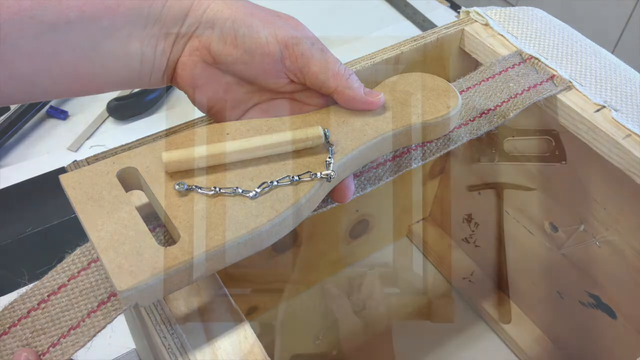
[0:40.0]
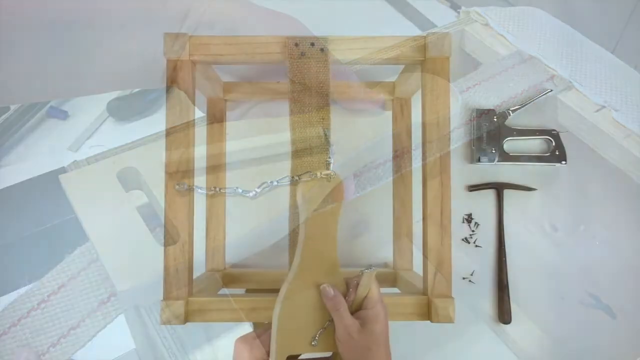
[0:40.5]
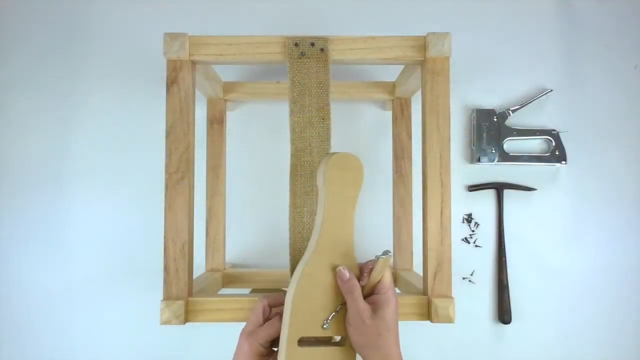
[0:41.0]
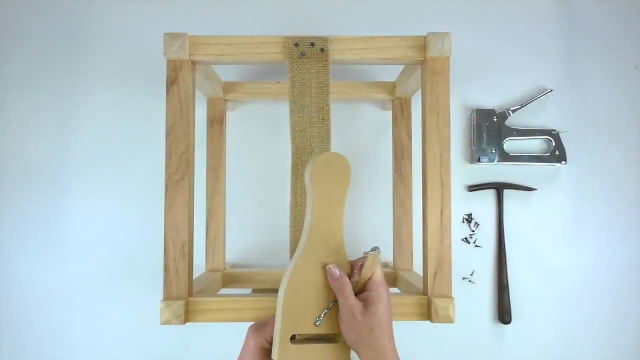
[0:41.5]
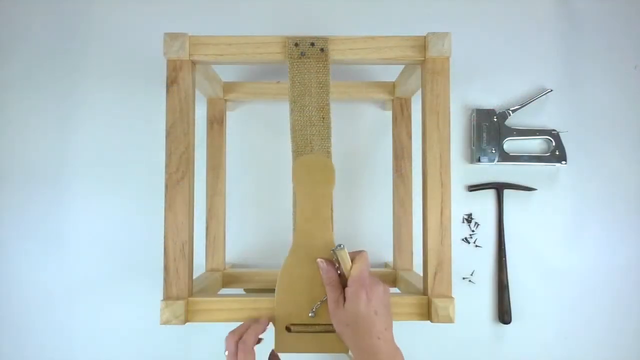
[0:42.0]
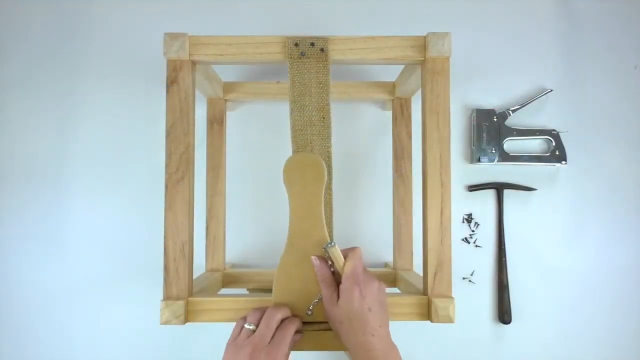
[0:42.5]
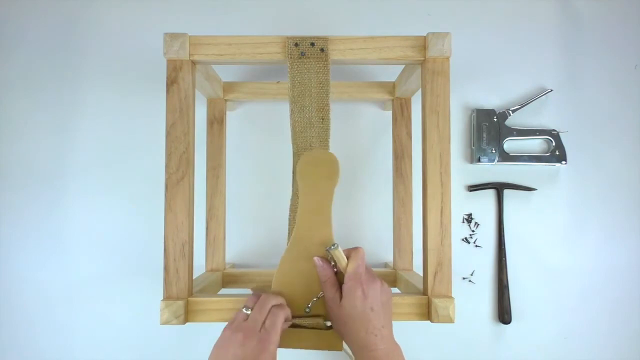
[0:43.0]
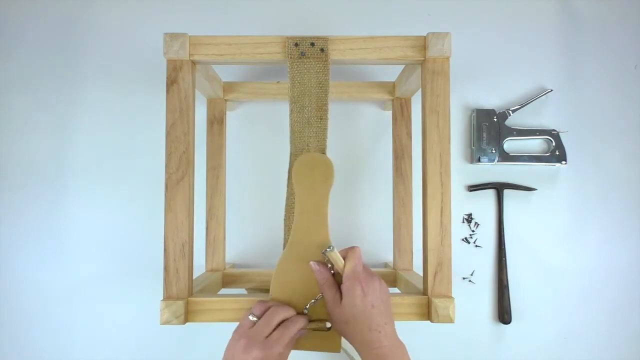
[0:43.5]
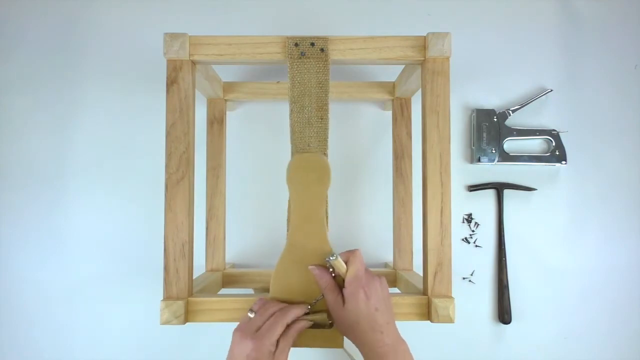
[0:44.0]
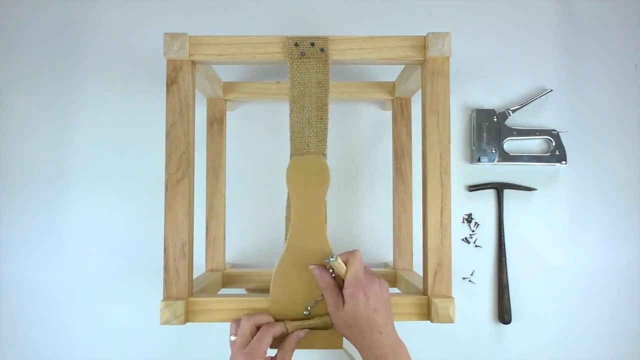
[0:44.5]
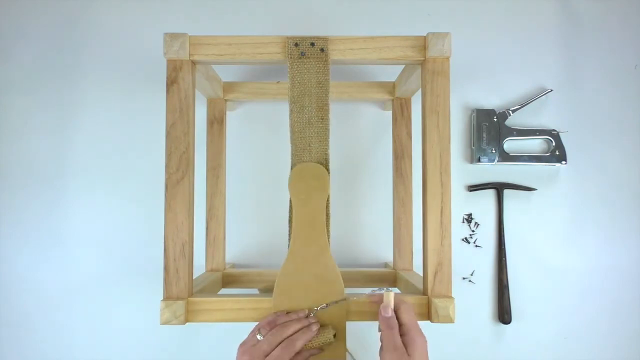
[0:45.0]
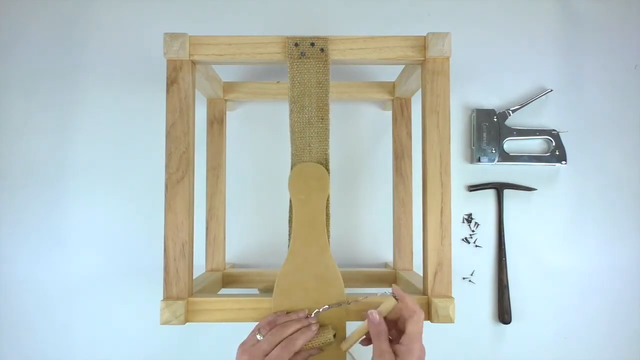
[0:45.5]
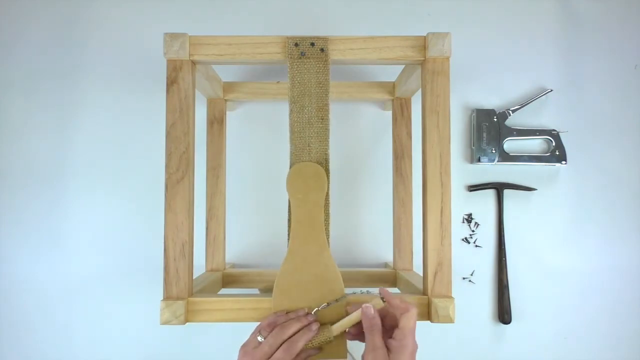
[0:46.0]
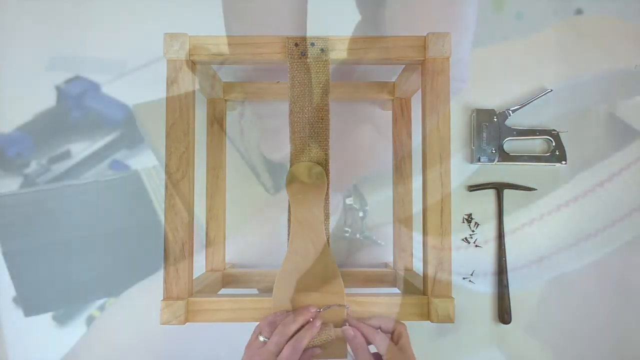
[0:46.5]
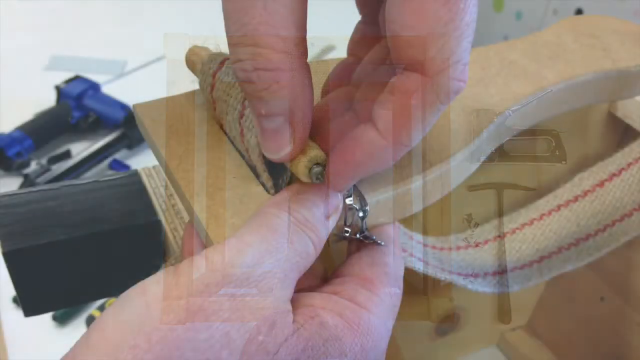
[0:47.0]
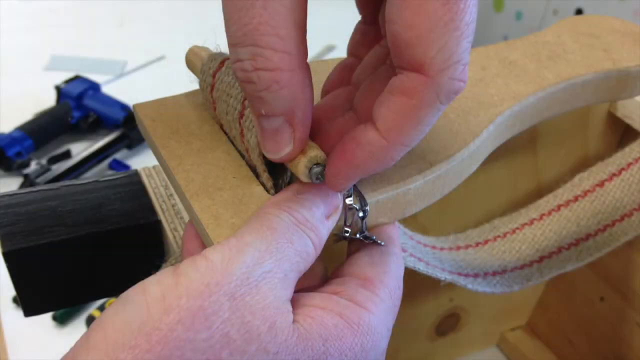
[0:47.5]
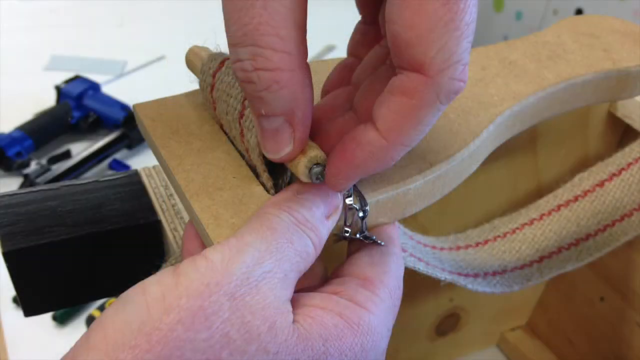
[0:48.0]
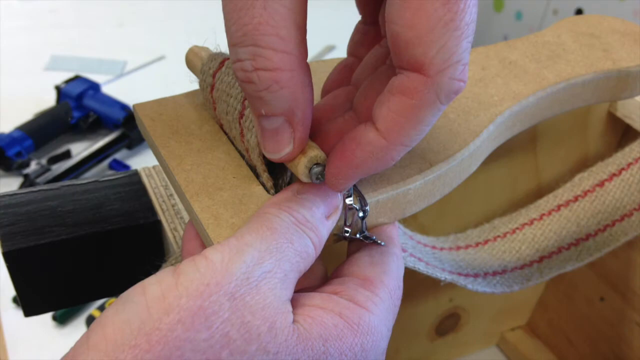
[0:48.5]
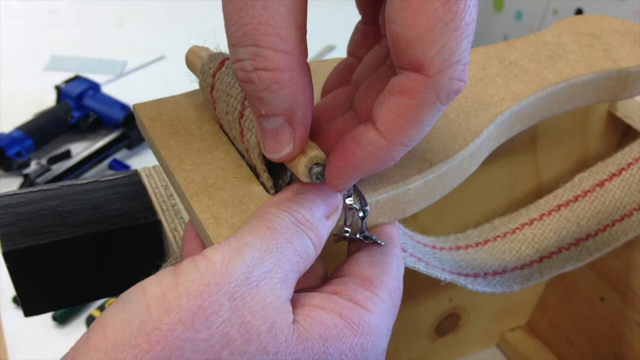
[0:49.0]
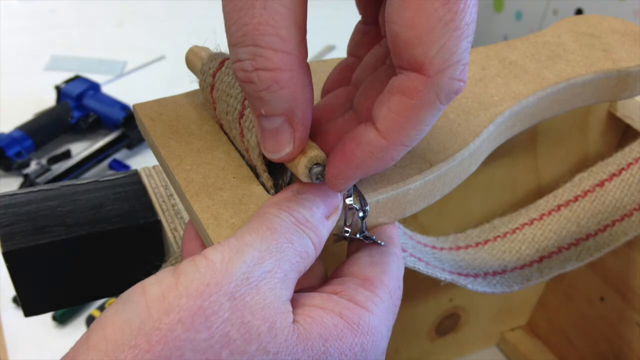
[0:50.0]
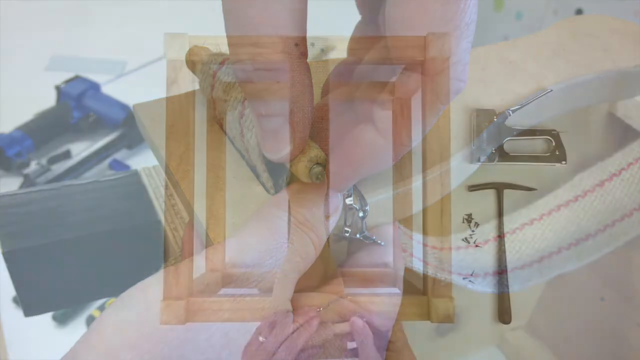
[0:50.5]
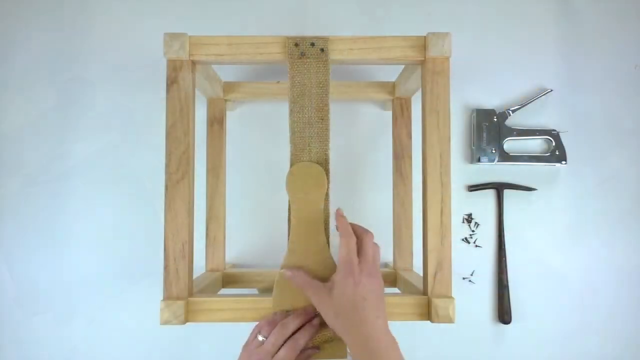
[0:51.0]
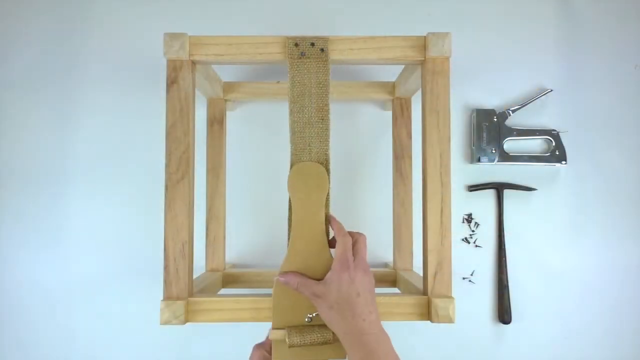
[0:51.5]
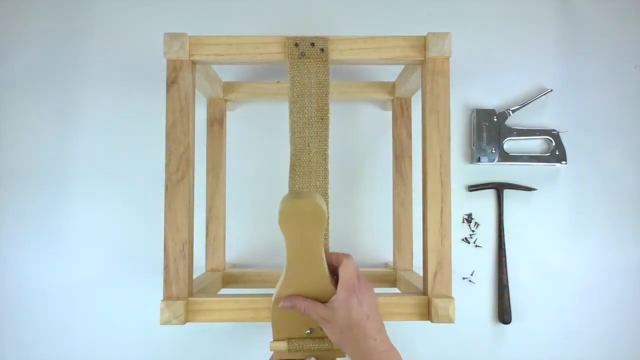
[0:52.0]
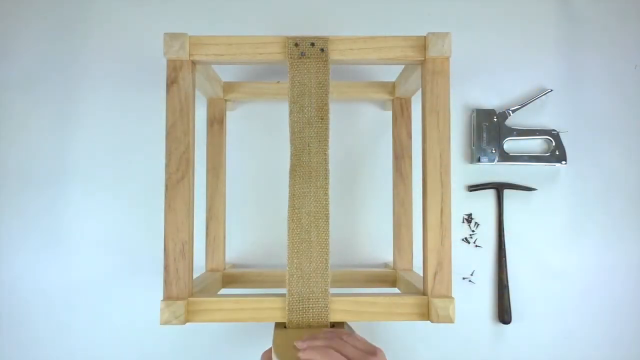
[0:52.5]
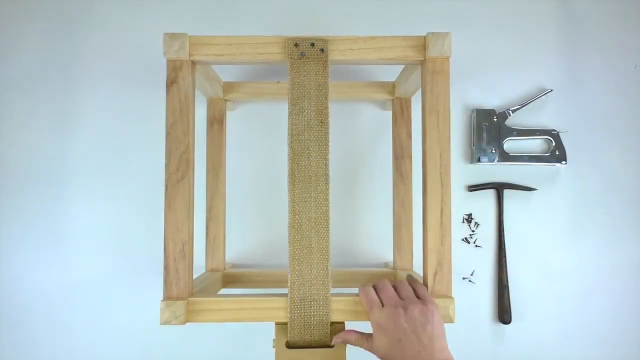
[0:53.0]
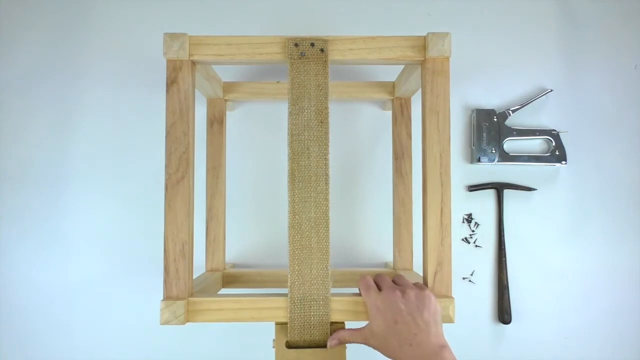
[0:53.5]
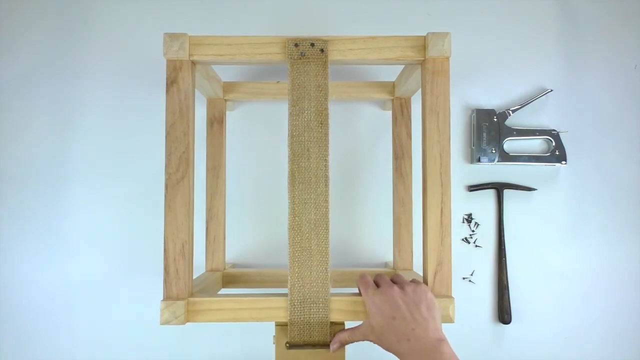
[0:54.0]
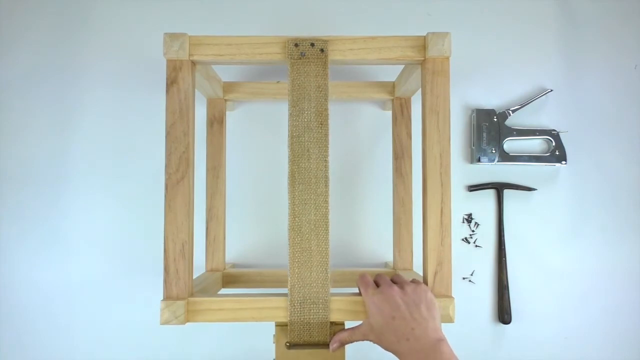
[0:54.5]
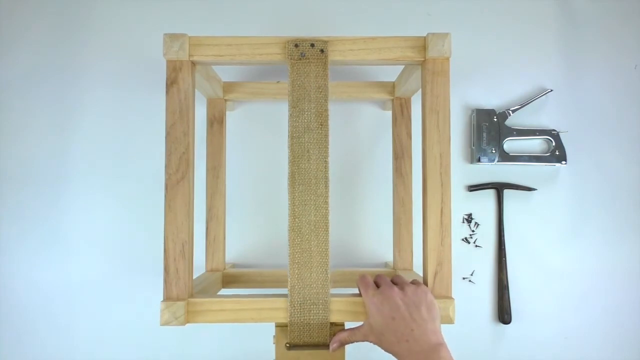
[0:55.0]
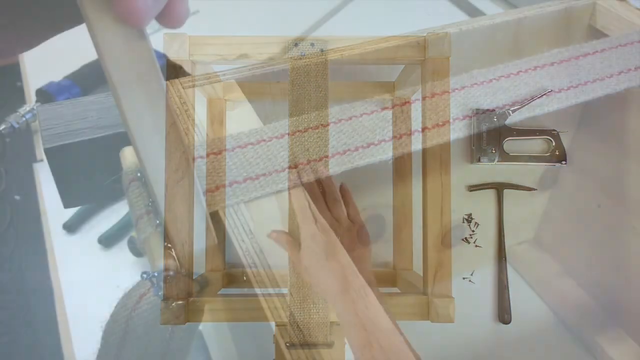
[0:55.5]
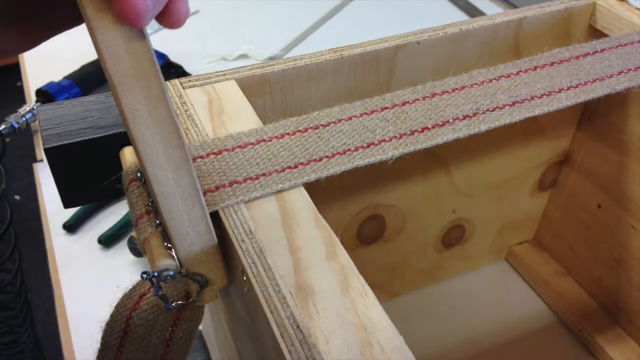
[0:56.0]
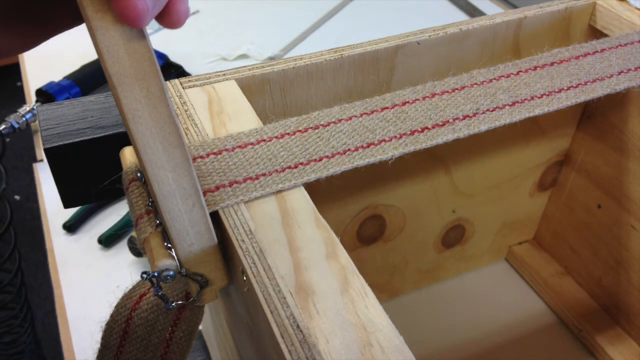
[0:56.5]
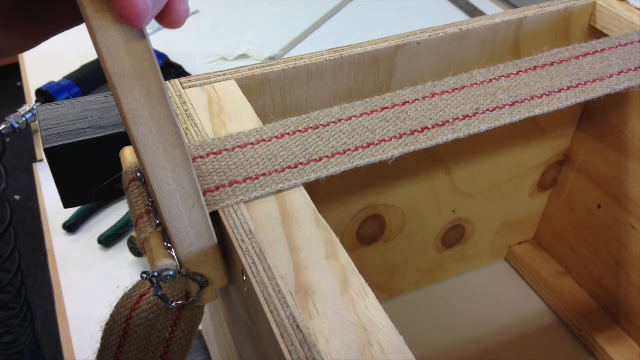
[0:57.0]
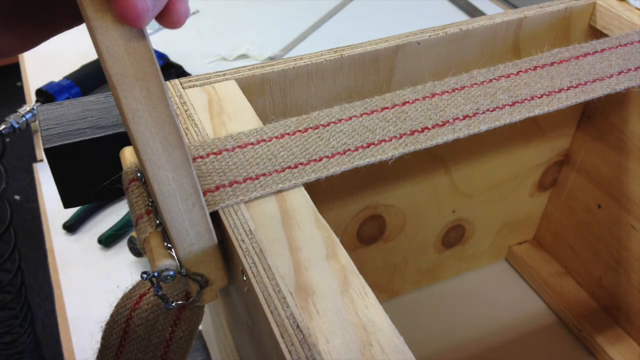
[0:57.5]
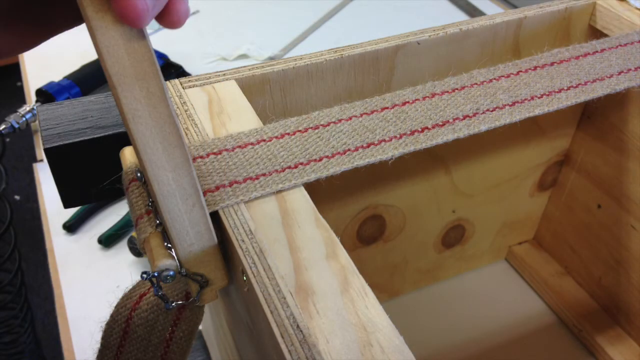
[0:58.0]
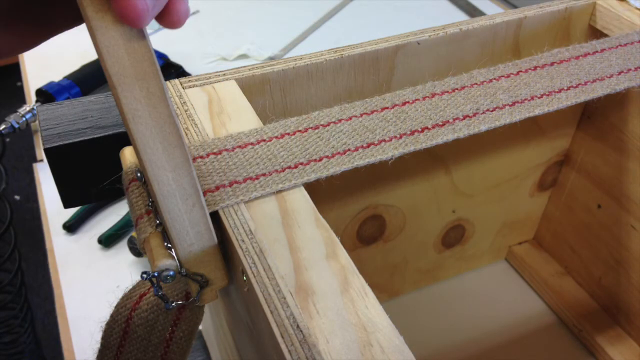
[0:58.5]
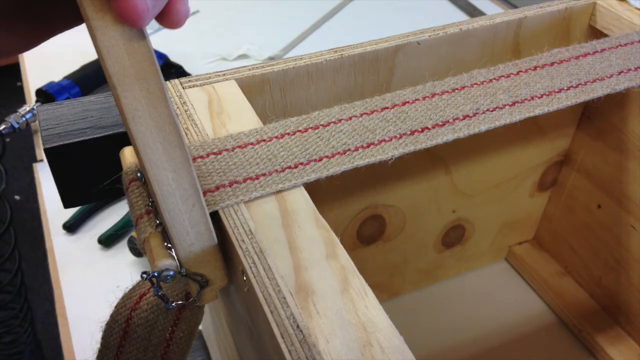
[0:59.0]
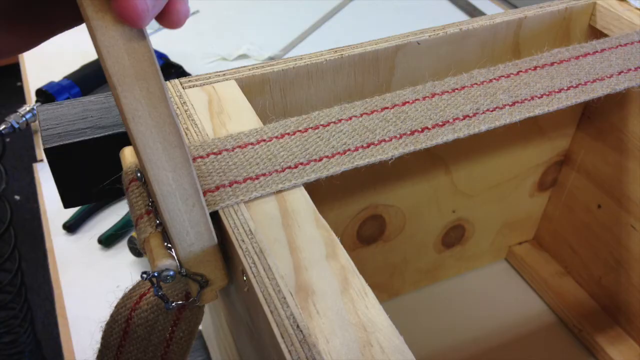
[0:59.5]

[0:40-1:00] Some sort of wooden box is being made; it is visible through its different areas, and only the outside of the box is being made. On the white surface below it are tools that look like a heavy-duty stapler and a hammer. A hand holds some sort of object and tries to hook it onto the box. Someone then pulls some ribbon through a certain area, apparently holding on to the box with their hand as they pull. The object has a small chain on it, and someone appears to be pulling some sort of wooden piece directly above where the ribbon is.